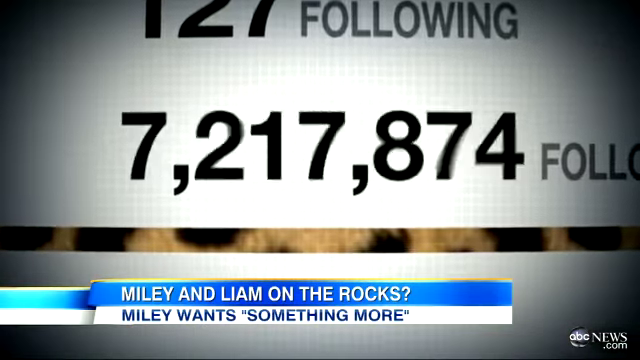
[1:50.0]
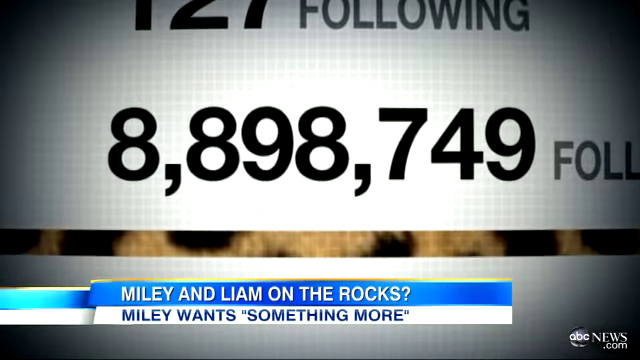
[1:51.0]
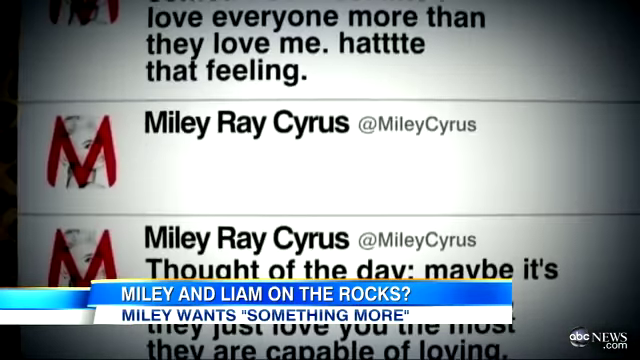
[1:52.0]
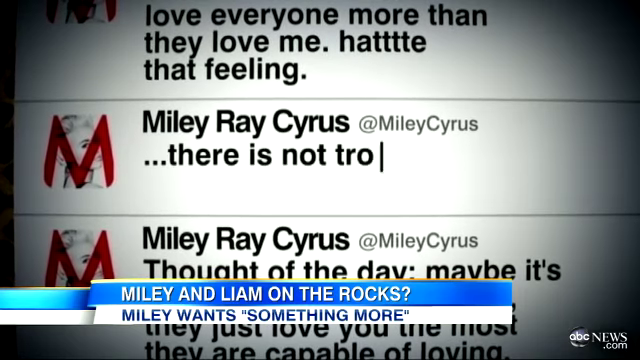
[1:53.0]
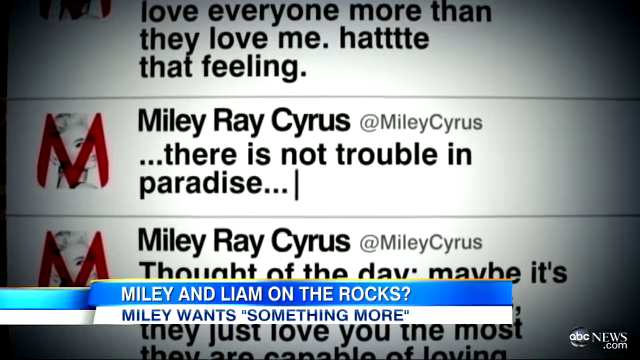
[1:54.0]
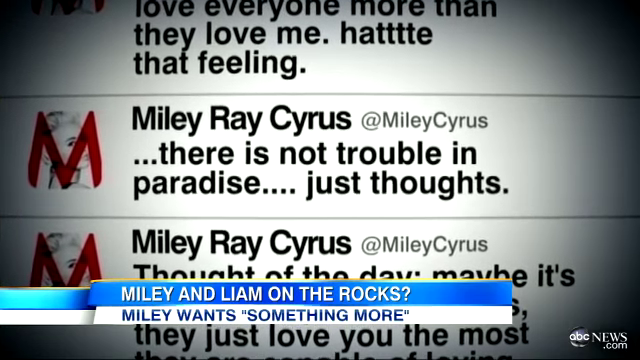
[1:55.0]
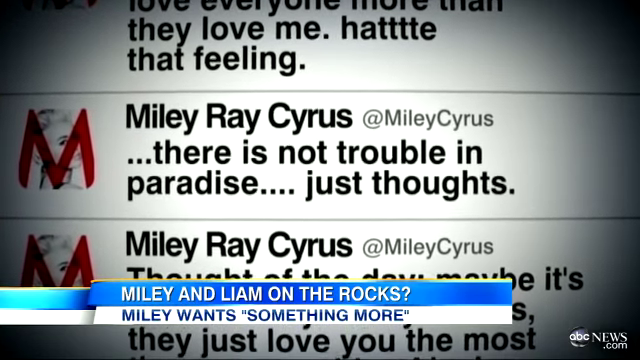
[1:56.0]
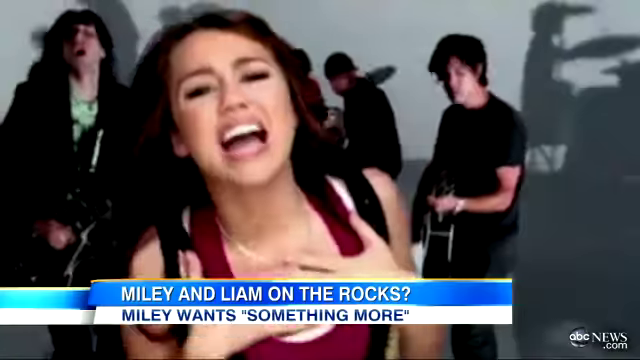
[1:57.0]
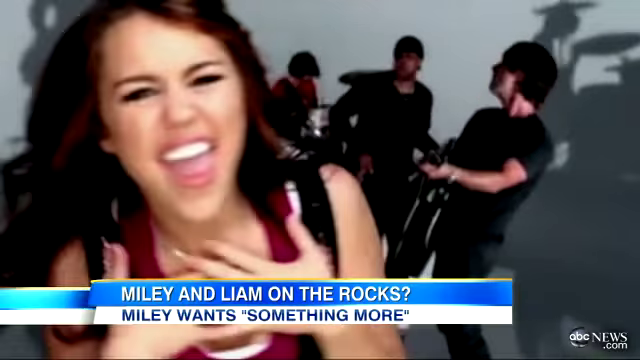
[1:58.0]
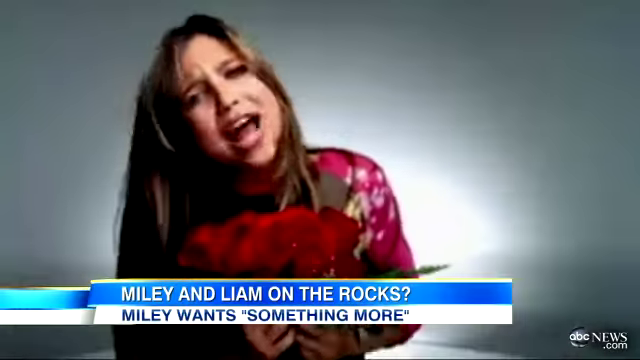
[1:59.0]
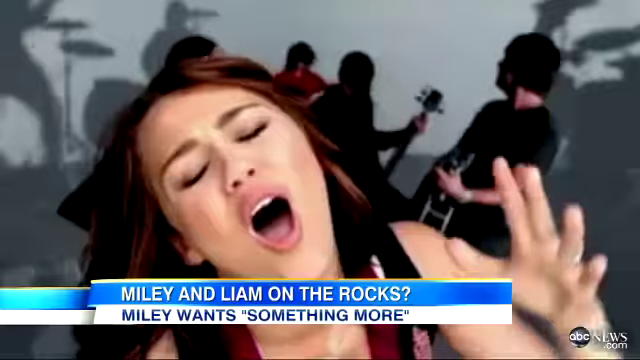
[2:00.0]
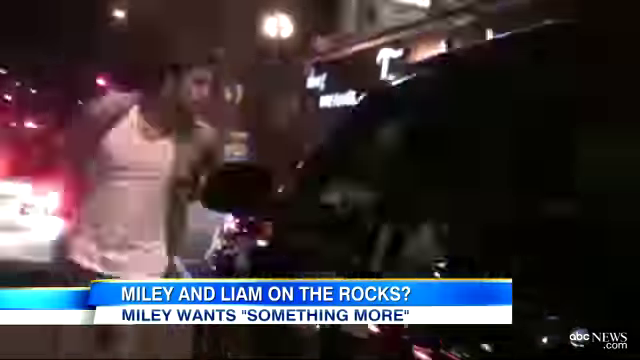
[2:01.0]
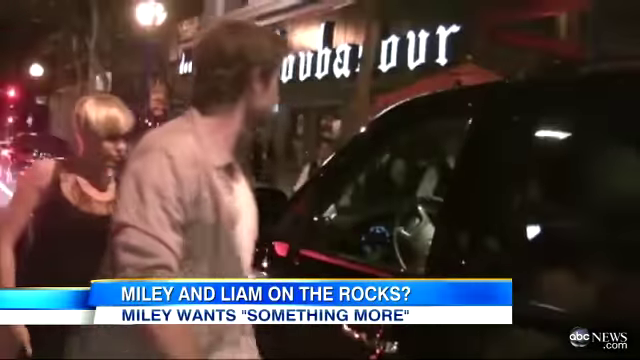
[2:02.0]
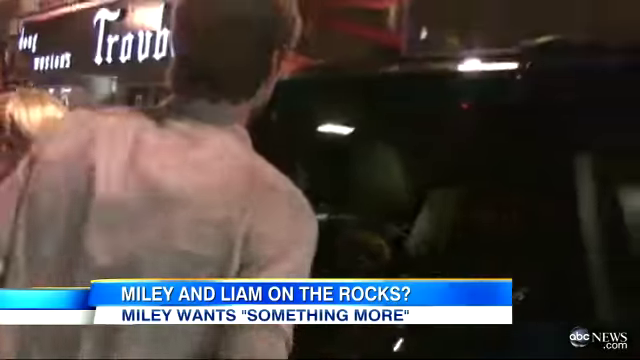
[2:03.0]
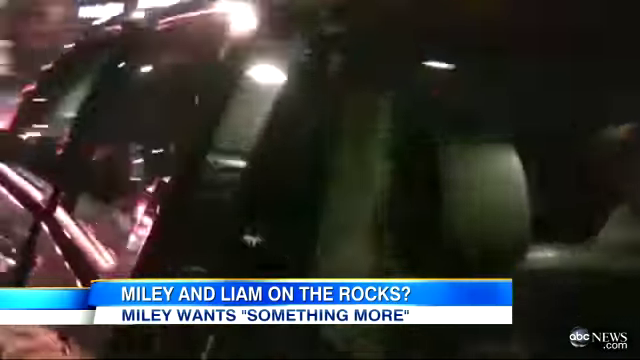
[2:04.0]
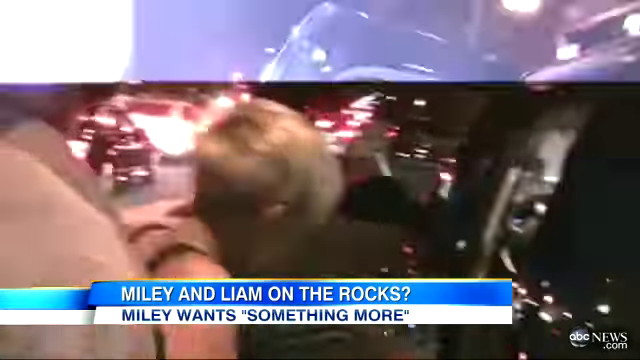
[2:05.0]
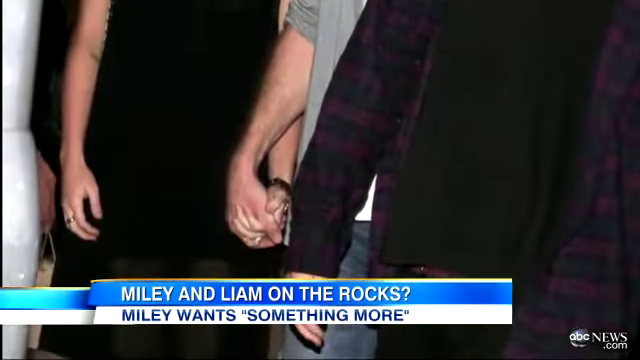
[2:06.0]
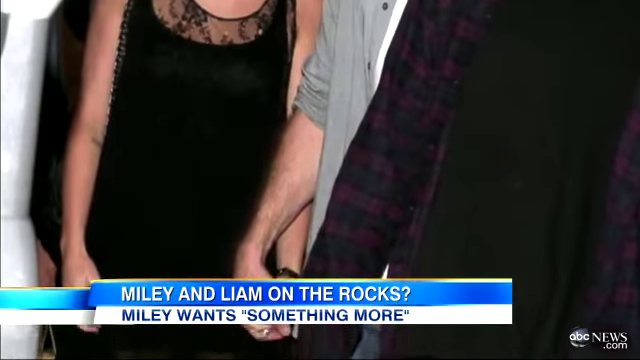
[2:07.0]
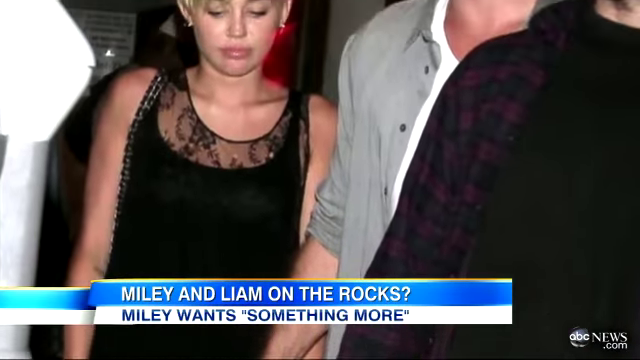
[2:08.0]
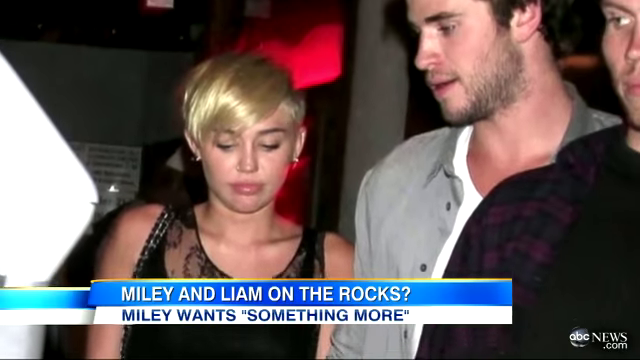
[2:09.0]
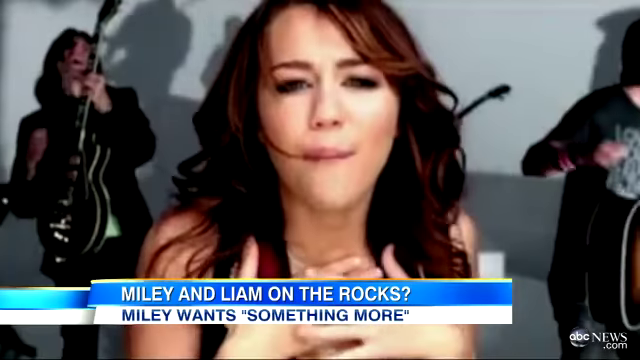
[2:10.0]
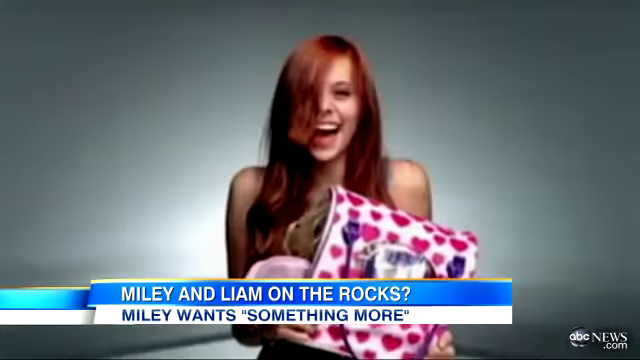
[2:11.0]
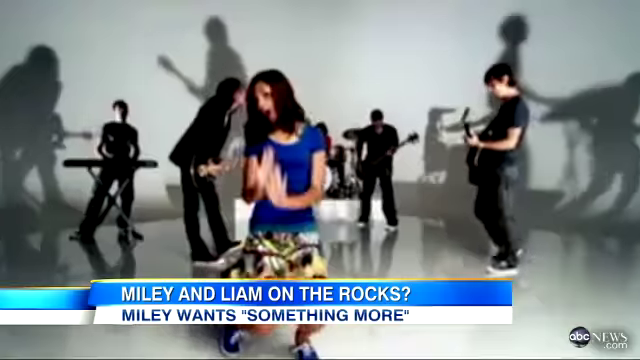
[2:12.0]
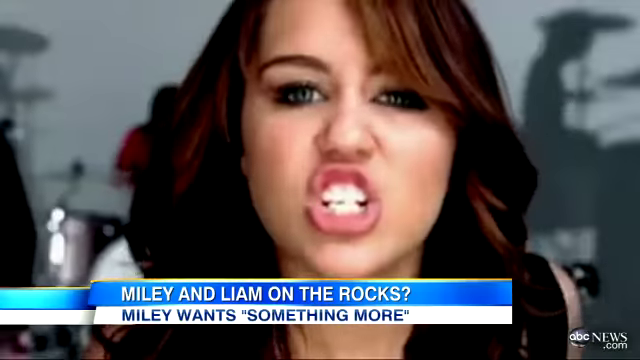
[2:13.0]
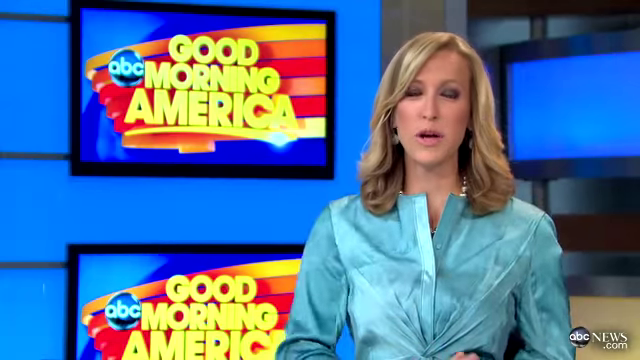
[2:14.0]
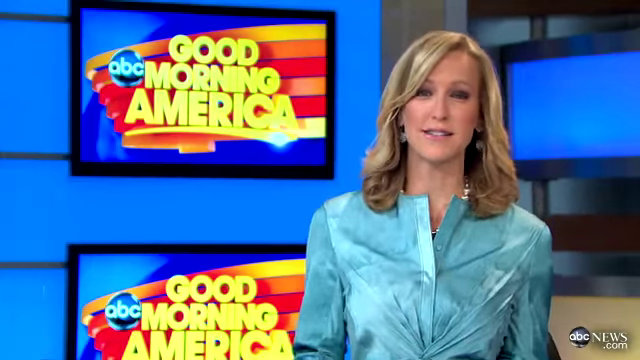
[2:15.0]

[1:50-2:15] The number of followers Miley Rae has is shown, along with her tweet "There's not trouble in paradise. Just thoughts." Her Twitter profile shows her face with a big M over top of it. She sings on stage with her band behind her, including a guitar player, keyboard player and drummer, and she dances in every video. She and her boyfriend get into a black van. The caption "Miley and Liam on the rocks. She wants something more" appears, then more footage of her singing. Some of the people look different, but they seem to be Miley across the years, sometimes with dark hair and sometimes blonde. The video returns to the Good Morning America studio, where the blonde woman anchor is at her desk wearing a pretty blue blouse, with two TV signs behind her reading "good morning, America".